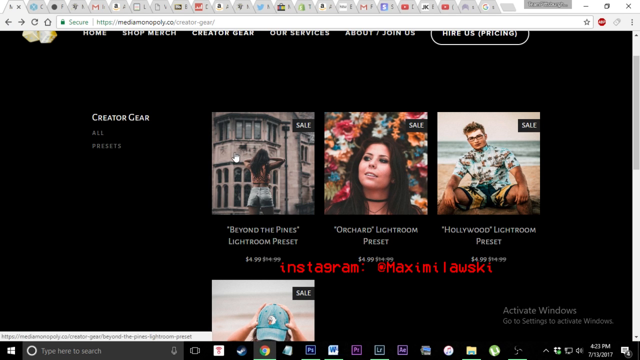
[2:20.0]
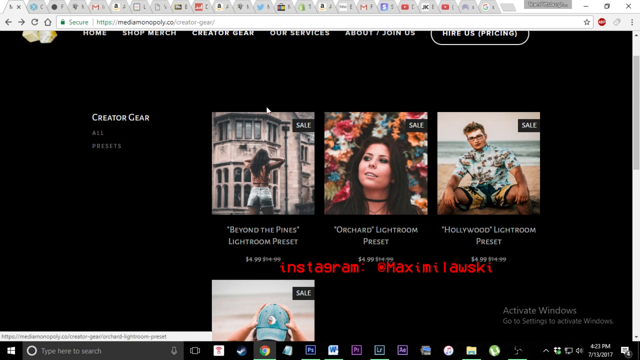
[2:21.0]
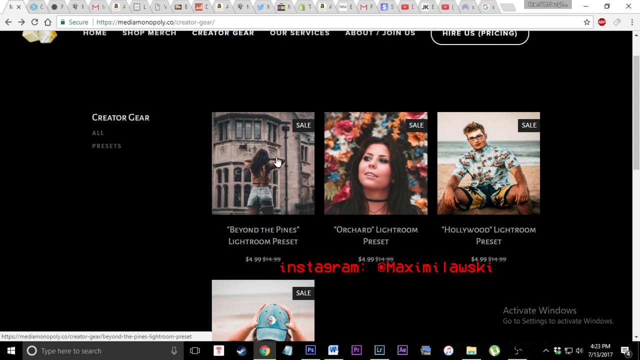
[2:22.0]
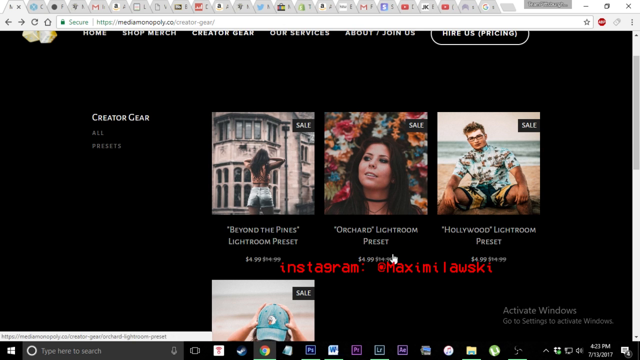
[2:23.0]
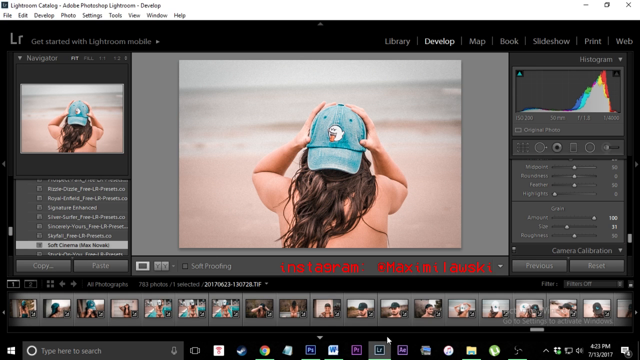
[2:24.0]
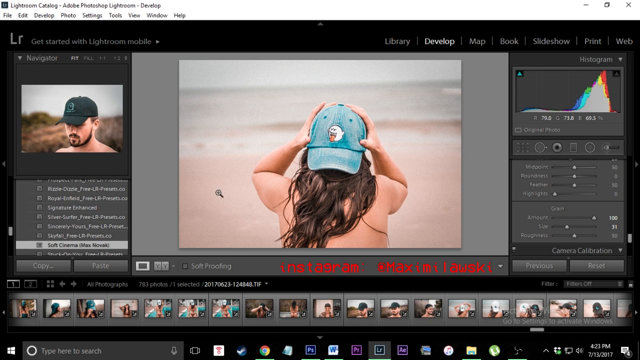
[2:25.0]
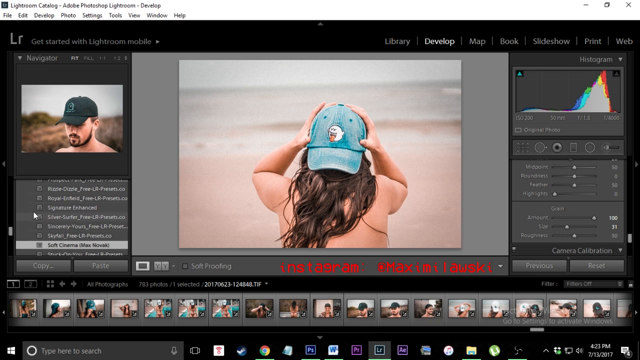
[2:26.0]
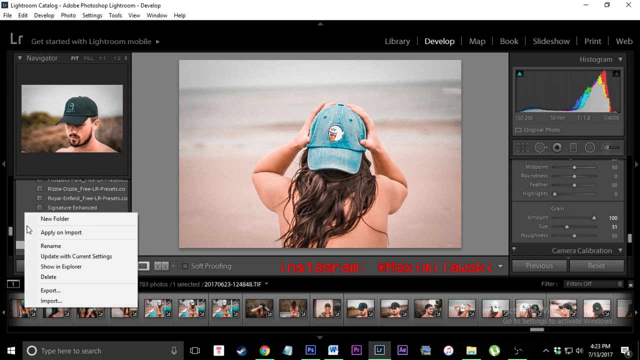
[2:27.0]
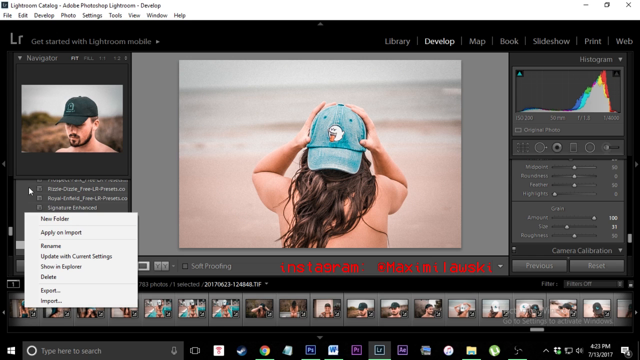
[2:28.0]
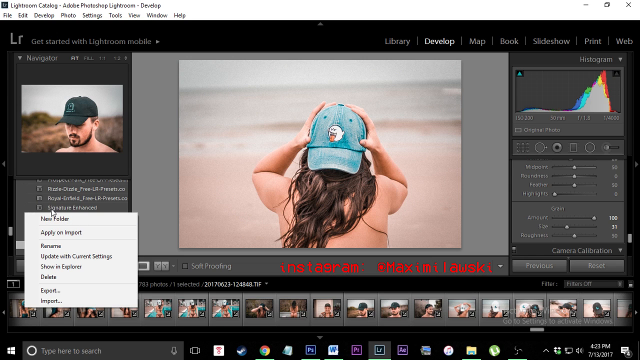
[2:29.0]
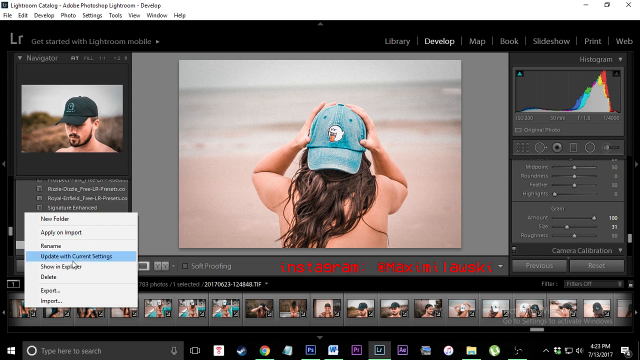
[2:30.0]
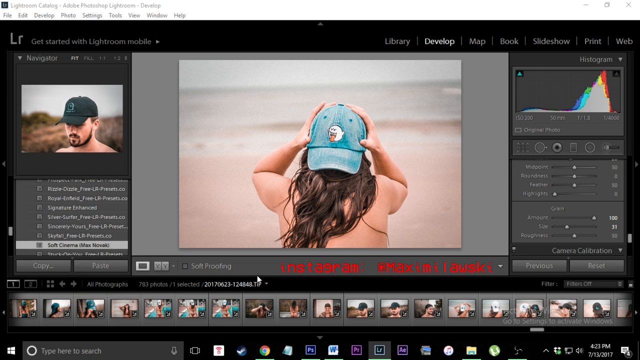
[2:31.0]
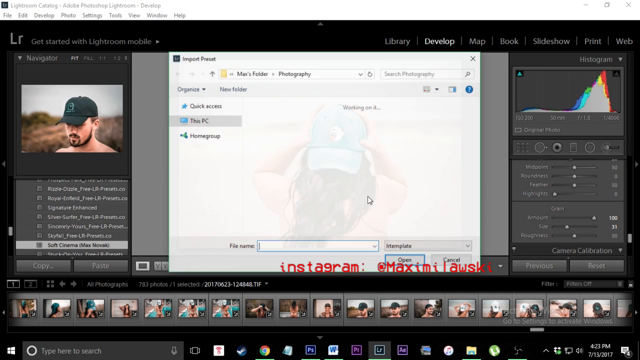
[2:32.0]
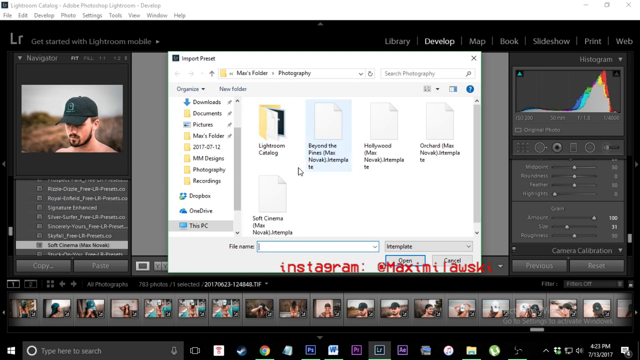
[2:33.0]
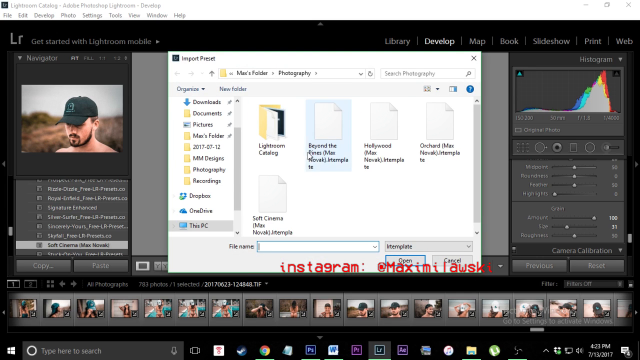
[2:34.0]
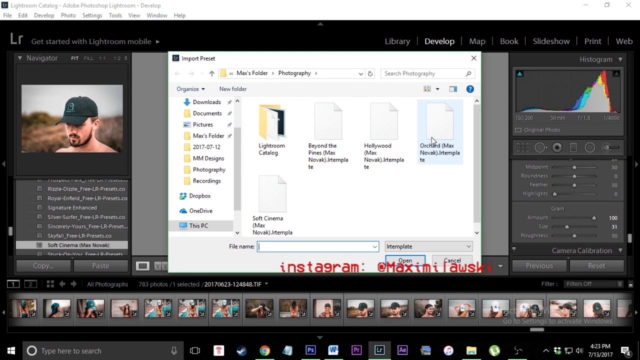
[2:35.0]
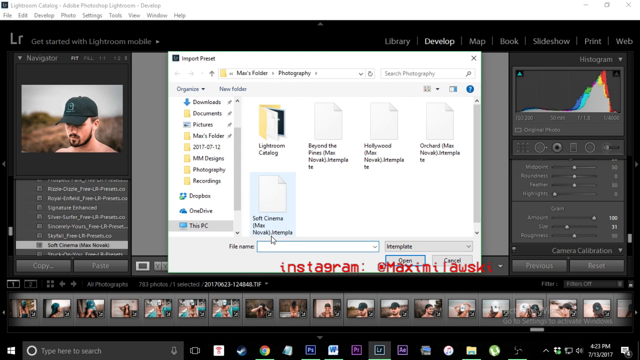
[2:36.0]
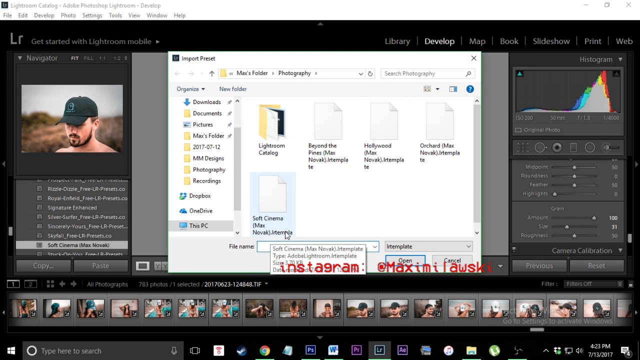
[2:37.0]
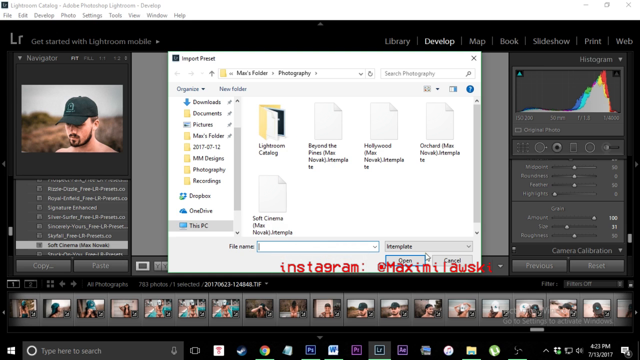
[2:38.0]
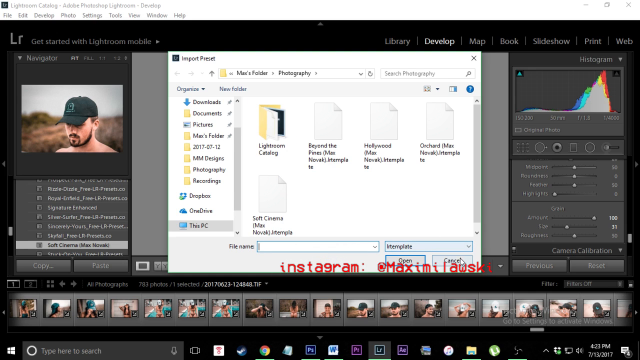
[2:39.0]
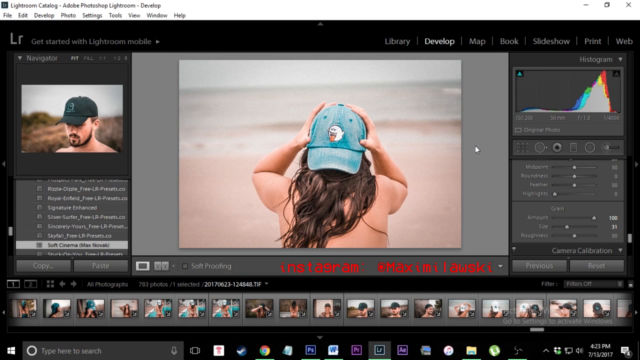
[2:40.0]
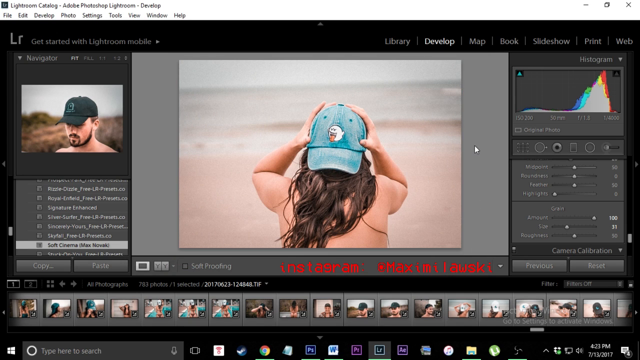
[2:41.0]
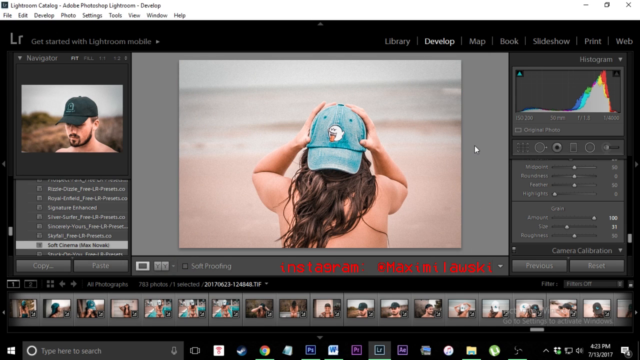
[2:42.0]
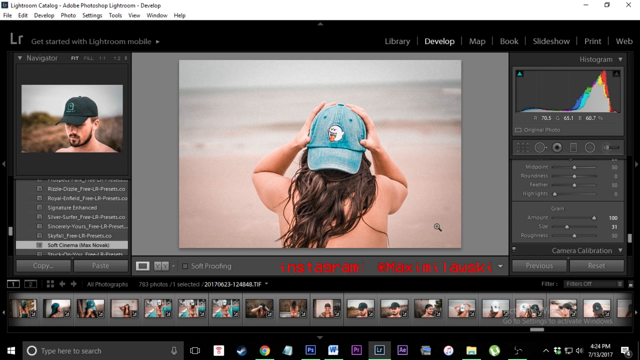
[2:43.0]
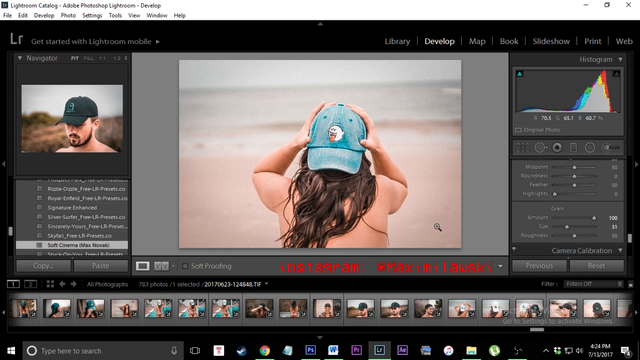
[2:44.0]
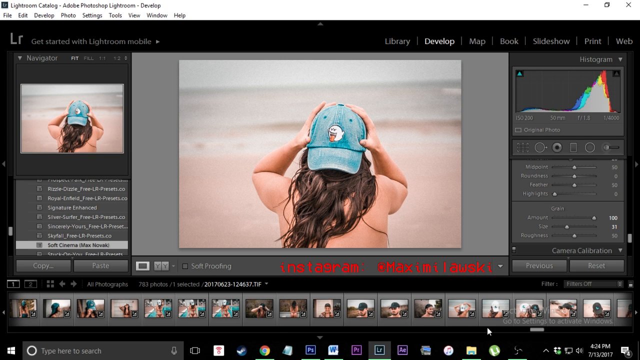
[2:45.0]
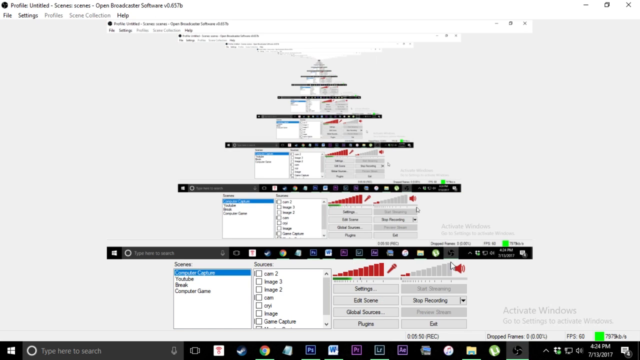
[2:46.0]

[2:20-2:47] A photo of a woman and a photo of a man are on the left. Someone clicks somewhere and types a file name, then another desktop page opens where a file name can be added, demonstrating how the edited photos are saved to the desktop.